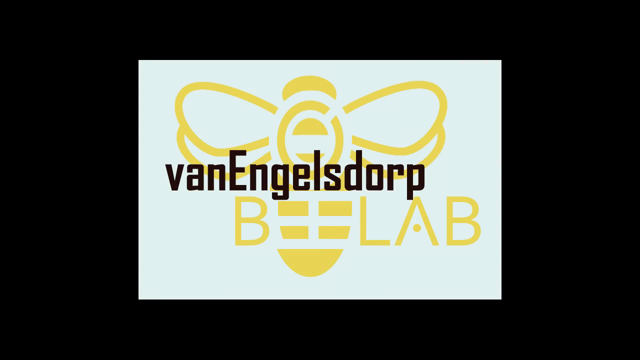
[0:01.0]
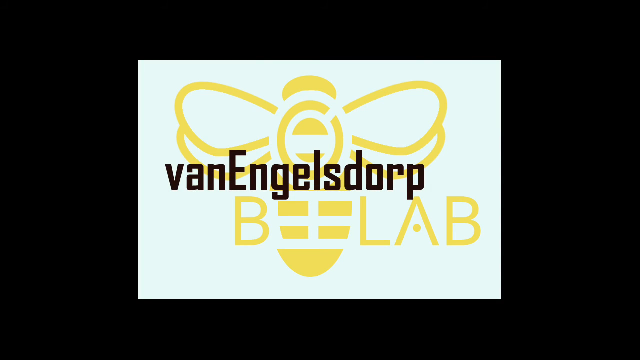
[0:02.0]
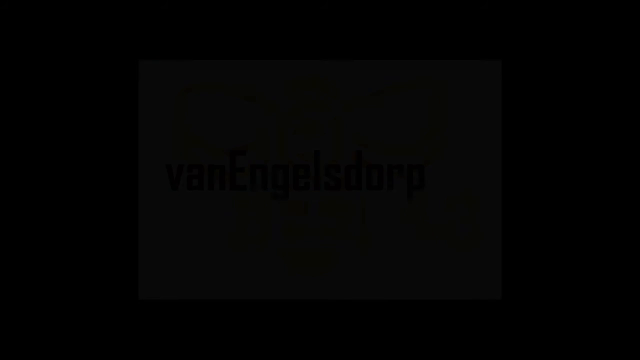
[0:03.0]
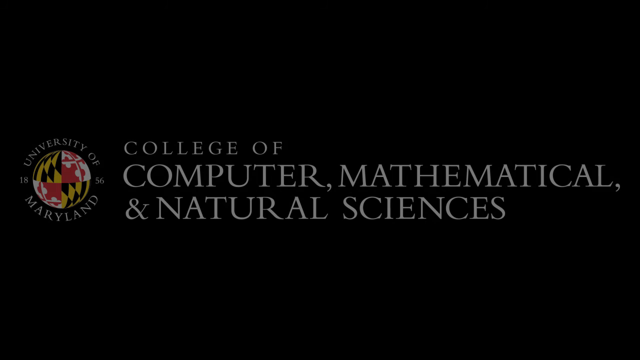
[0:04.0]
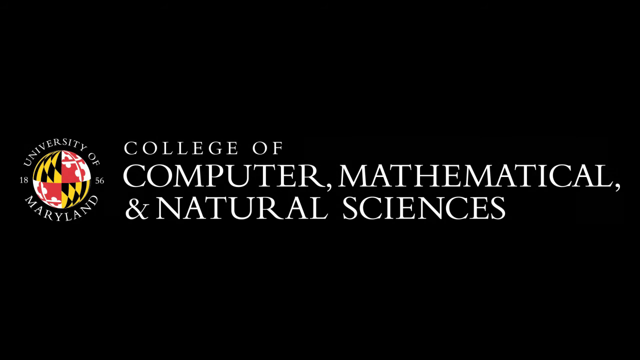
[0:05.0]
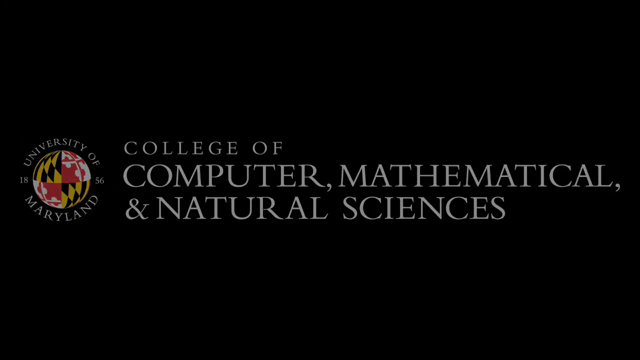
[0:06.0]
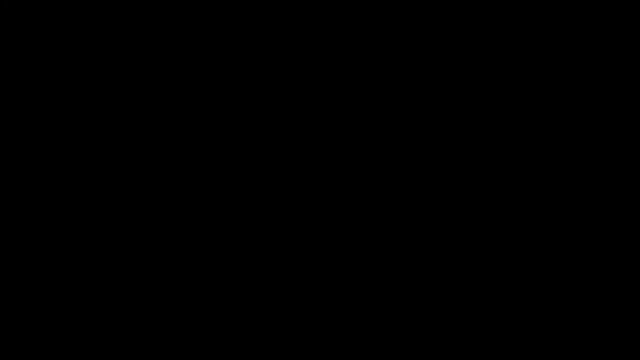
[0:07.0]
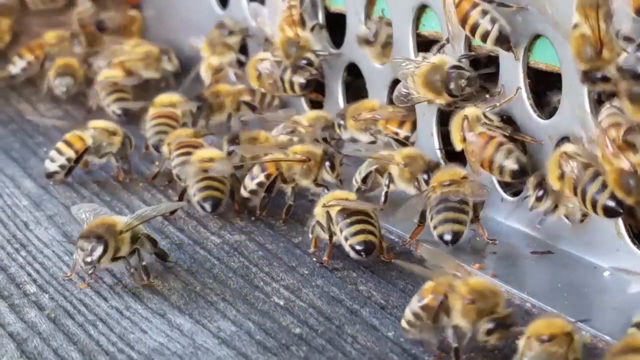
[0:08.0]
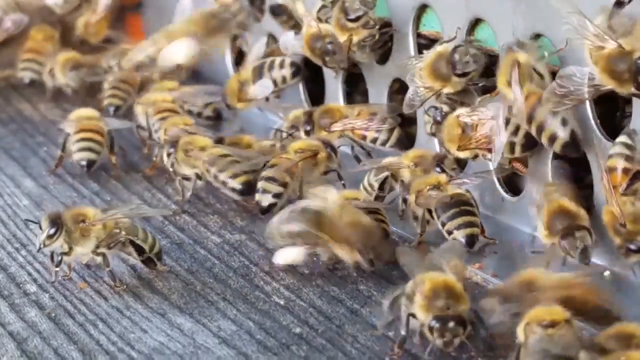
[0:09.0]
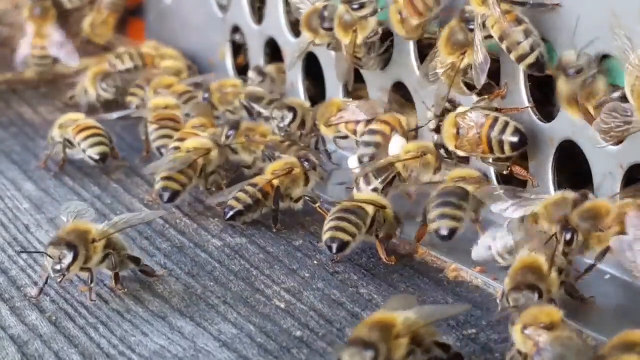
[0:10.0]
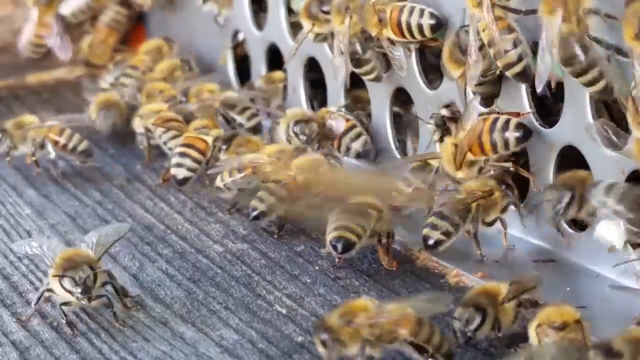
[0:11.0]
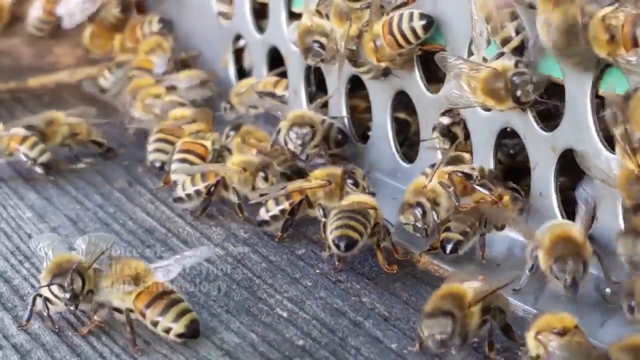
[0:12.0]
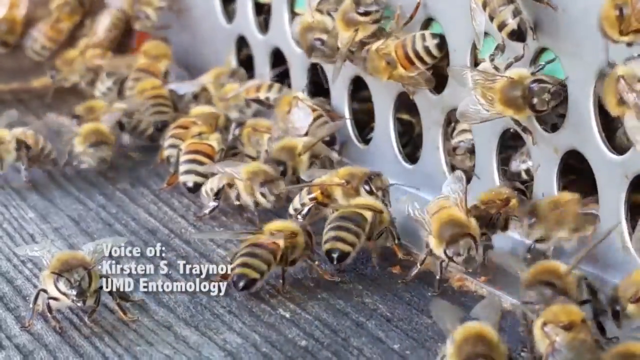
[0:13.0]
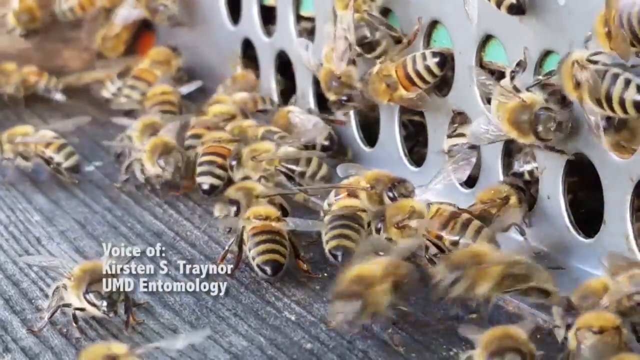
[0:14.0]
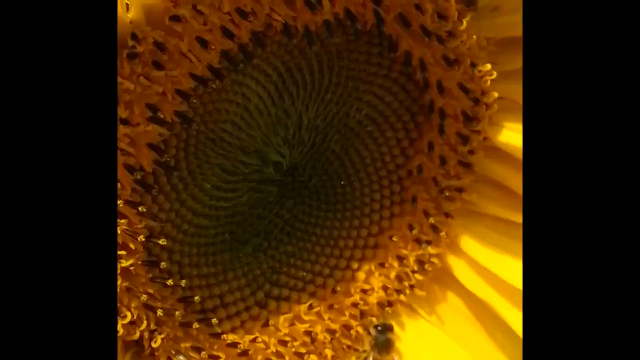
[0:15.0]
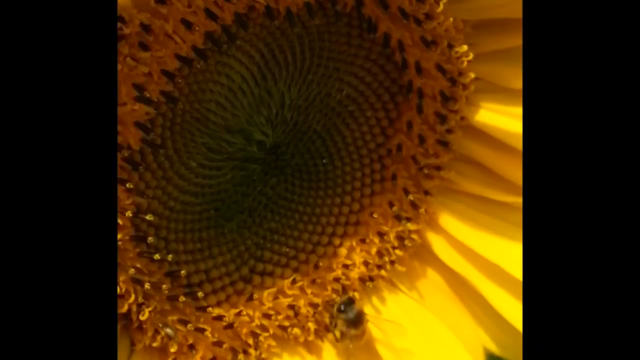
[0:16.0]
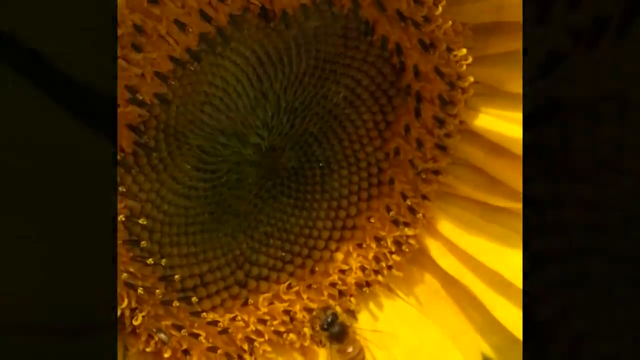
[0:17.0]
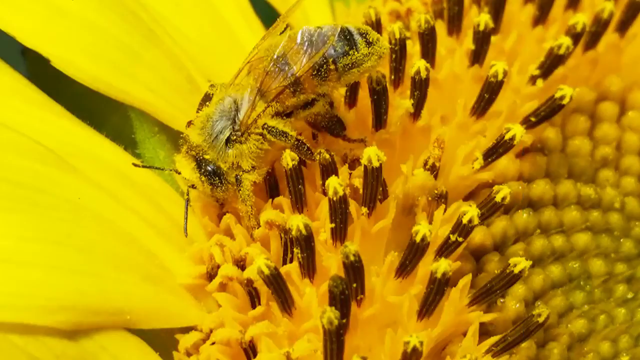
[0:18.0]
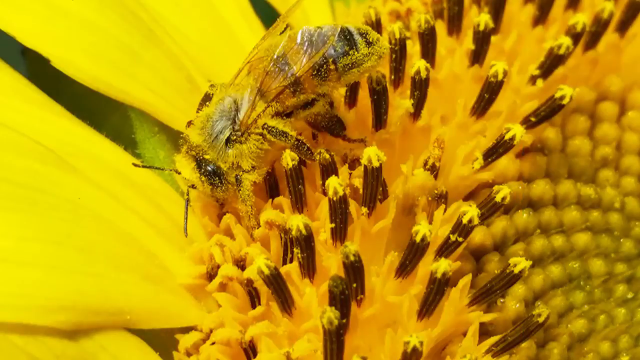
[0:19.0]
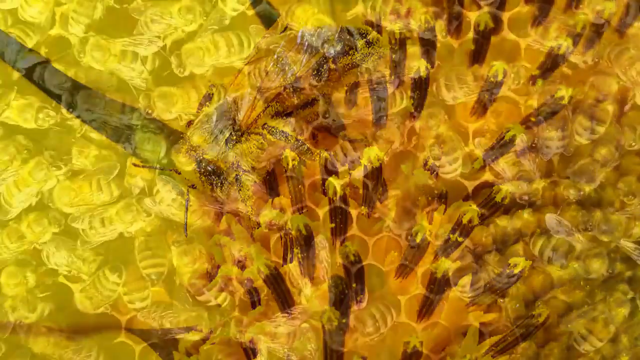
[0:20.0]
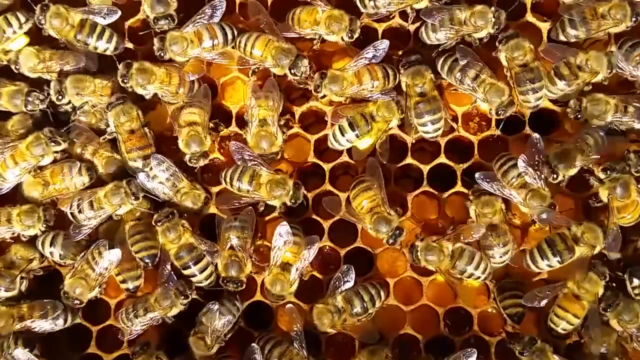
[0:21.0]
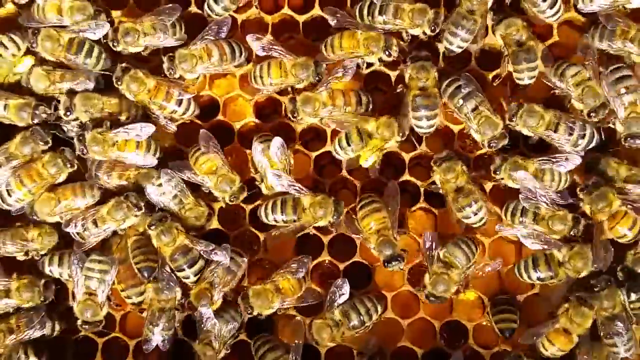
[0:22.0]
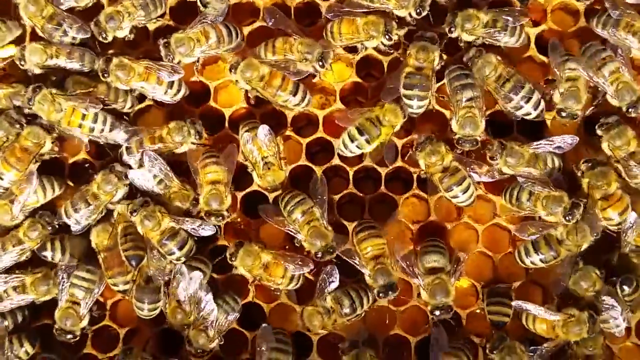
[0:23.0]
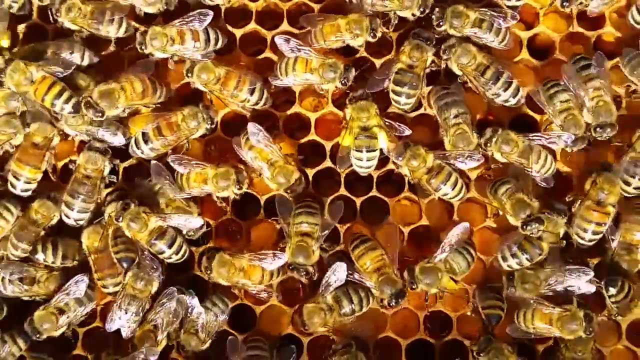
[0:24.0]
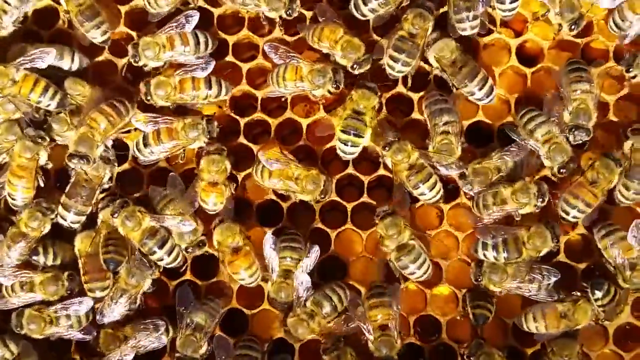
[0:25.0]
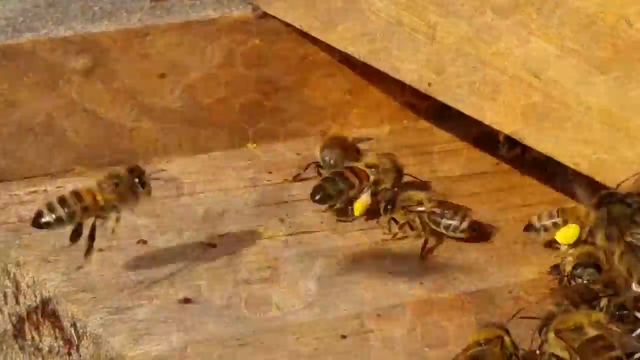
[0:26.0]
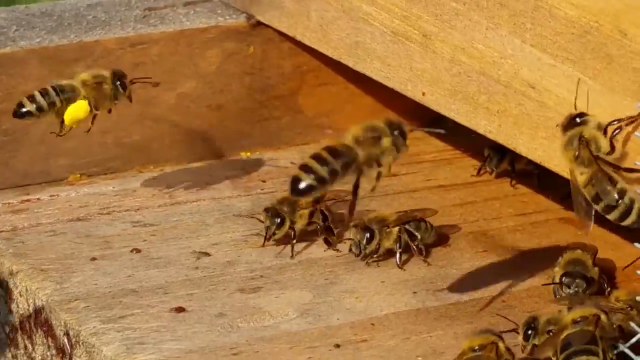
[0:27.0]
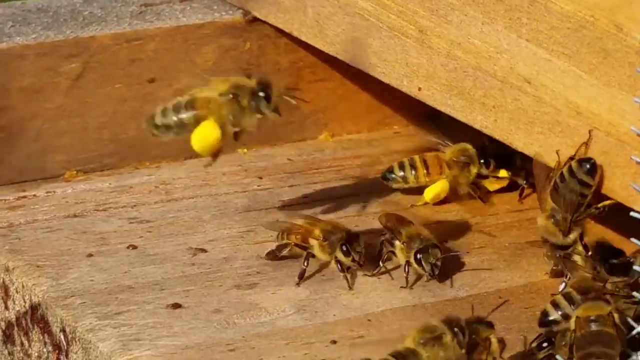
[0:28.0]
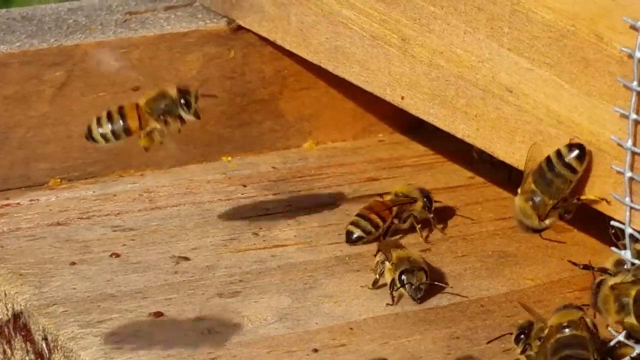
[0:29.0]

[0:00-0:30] A slide indicates a bee lab (B-E-E) from the College of Computer, Mathematical, and Natural Sciences at the University of Maryland. The scene changes to about 20 yellow-and-black bees swarming around an artificial metal honeycomb that extends from the right edge of the frame toward the center and moves toward the upper left corner as it disappears; the rest of the image is silver and white. More bees fly into the scene from the left as others fly away. The voiceover is identified as coming from Kirsten S. Traynor of the University of Maryland Entomology Department. Next comes a close-up of a yellow flower swarmed by bees, then a still photograph of many bees, then footage of many bees putting honey in a honeycomb. Bees then fly to their nest, which is under a plank of wood near a metal netting lattice device.